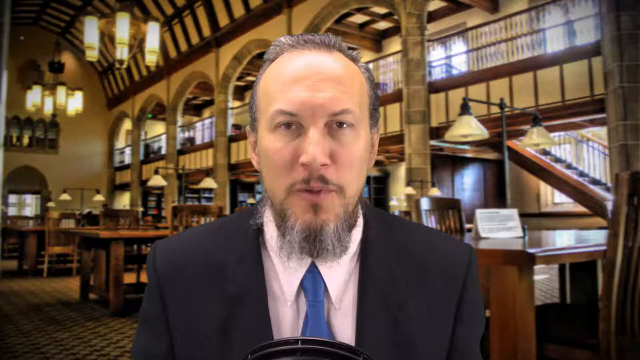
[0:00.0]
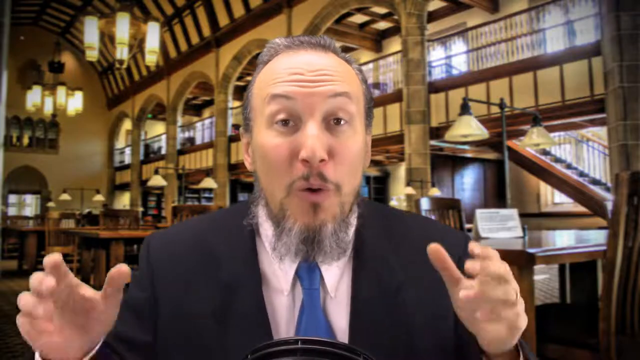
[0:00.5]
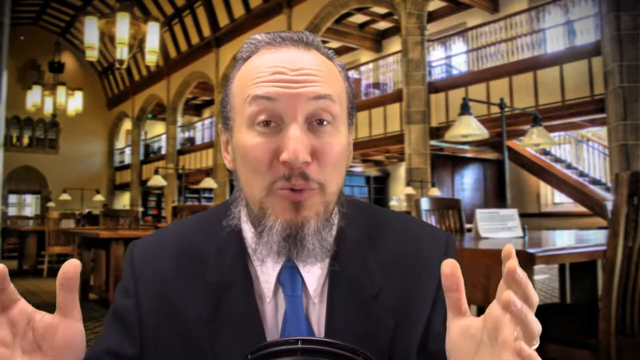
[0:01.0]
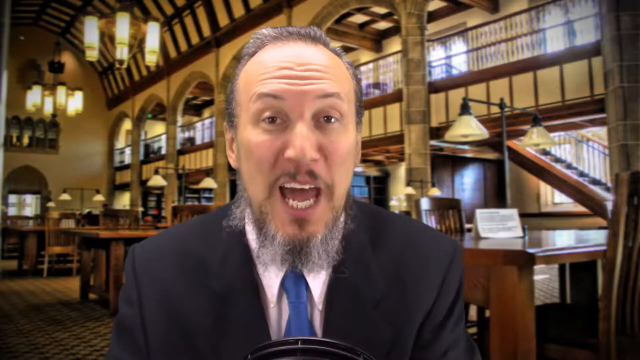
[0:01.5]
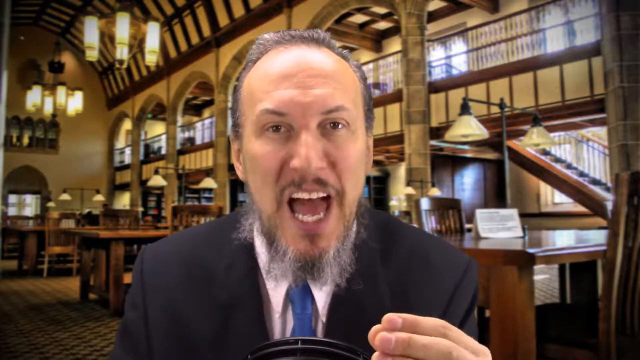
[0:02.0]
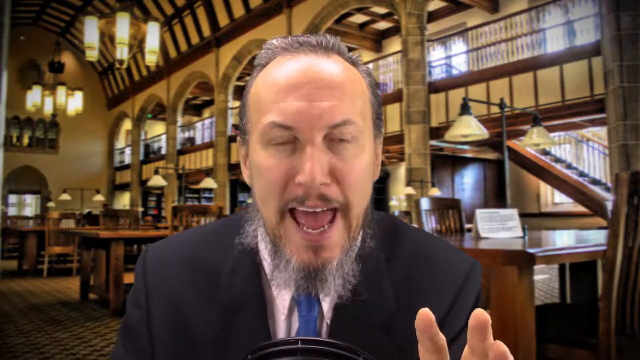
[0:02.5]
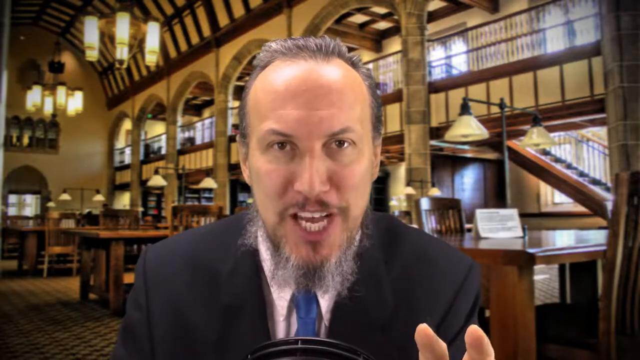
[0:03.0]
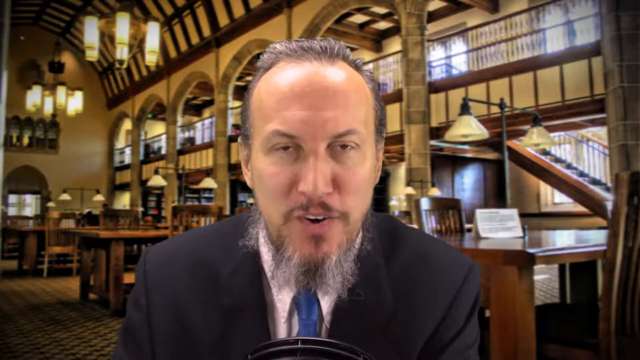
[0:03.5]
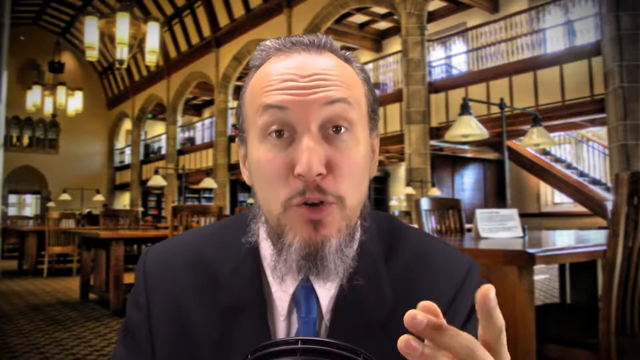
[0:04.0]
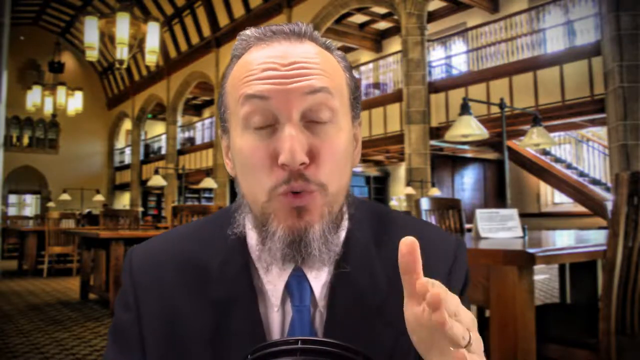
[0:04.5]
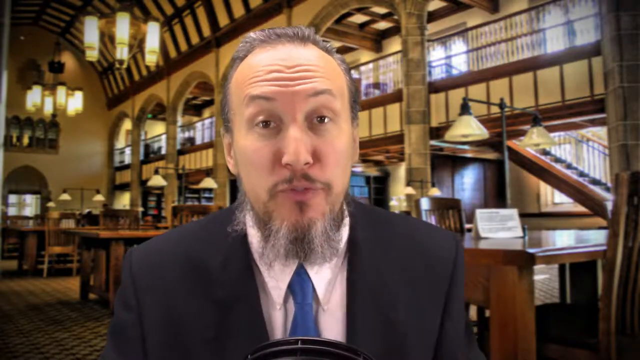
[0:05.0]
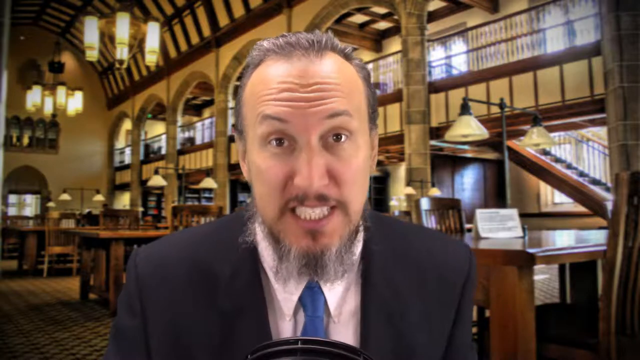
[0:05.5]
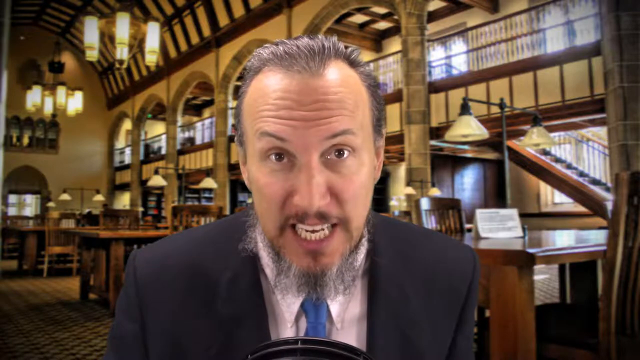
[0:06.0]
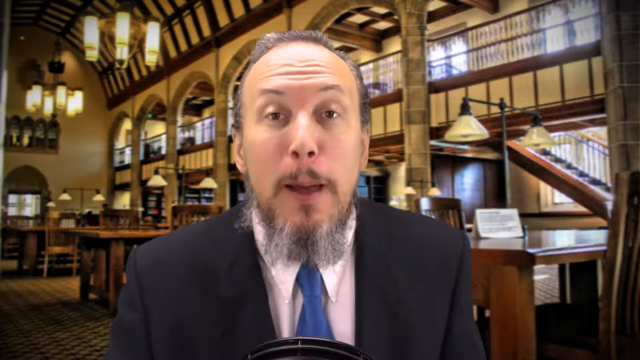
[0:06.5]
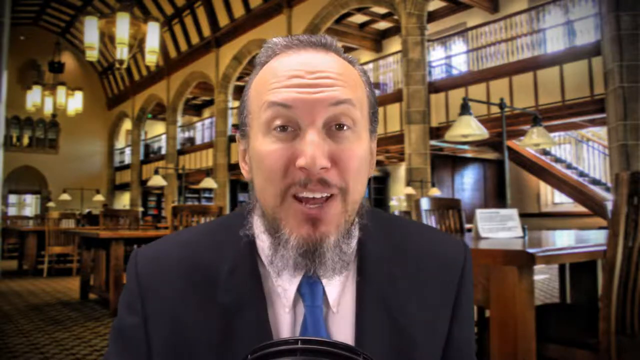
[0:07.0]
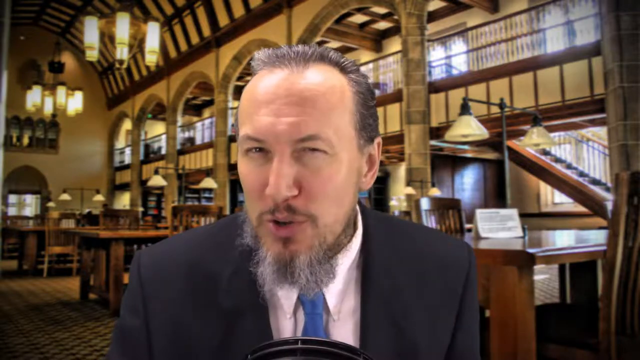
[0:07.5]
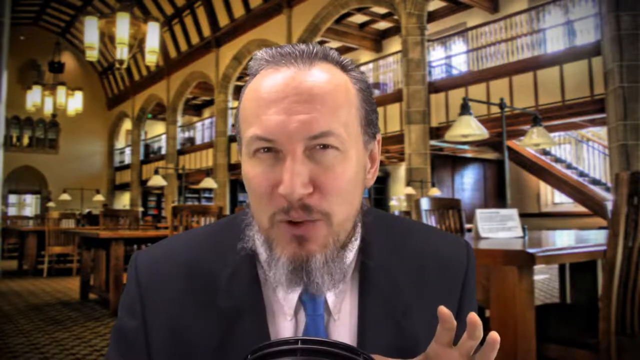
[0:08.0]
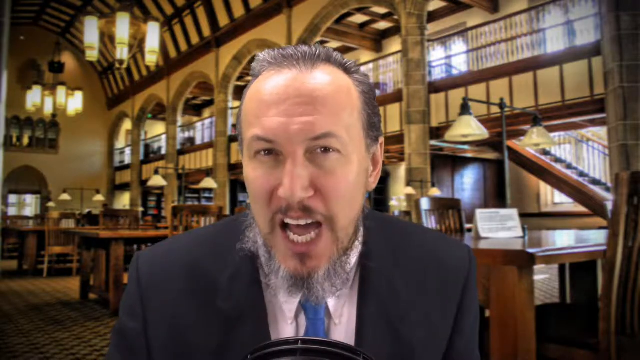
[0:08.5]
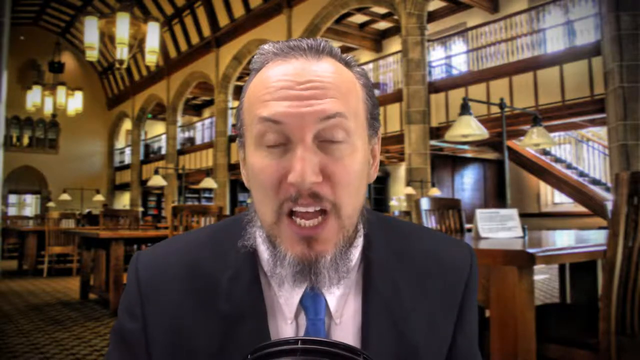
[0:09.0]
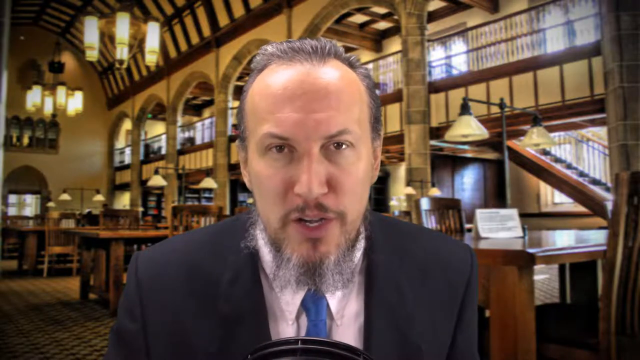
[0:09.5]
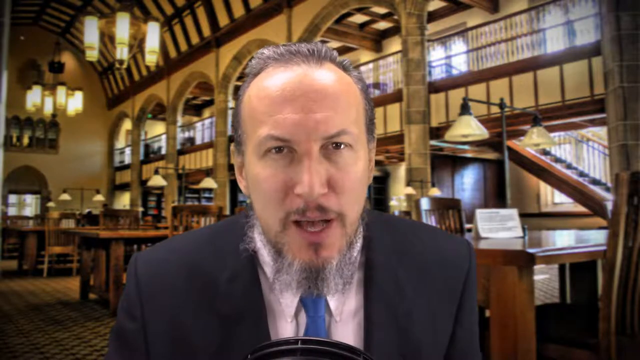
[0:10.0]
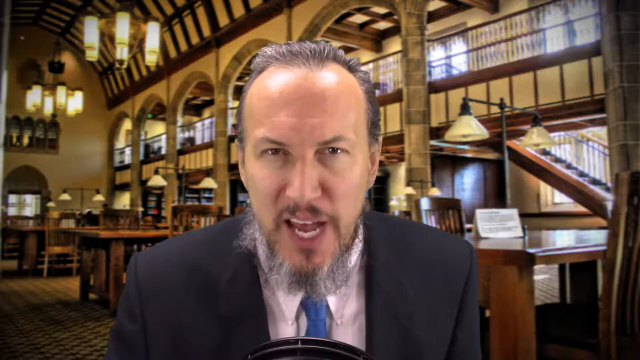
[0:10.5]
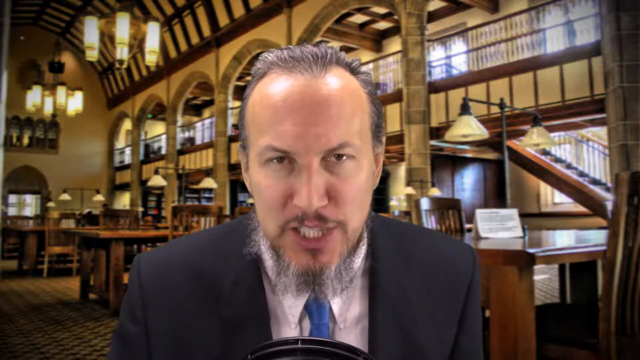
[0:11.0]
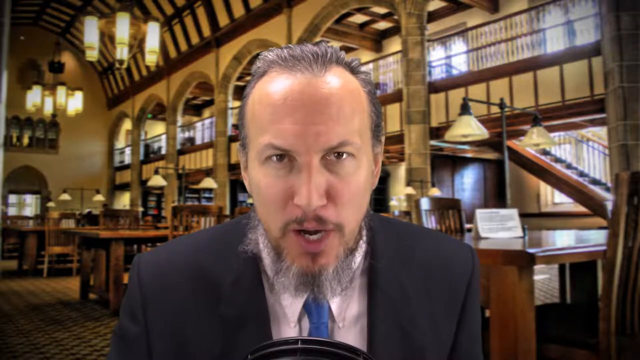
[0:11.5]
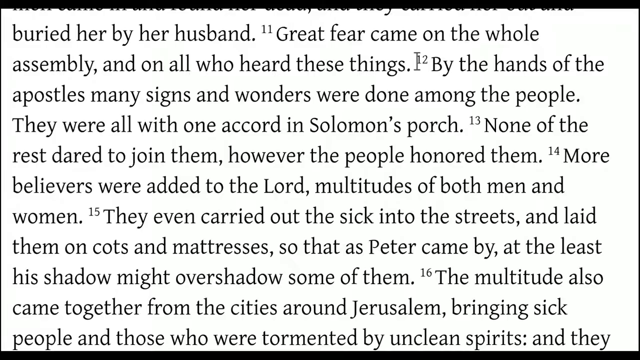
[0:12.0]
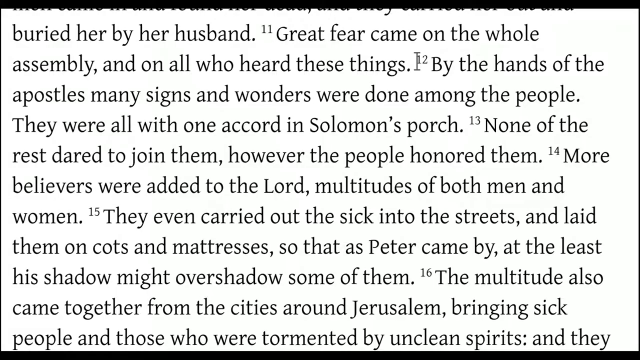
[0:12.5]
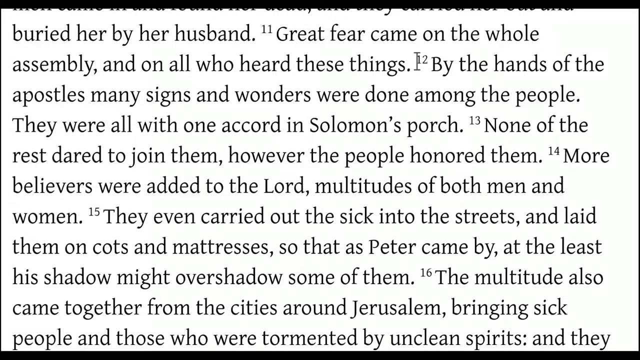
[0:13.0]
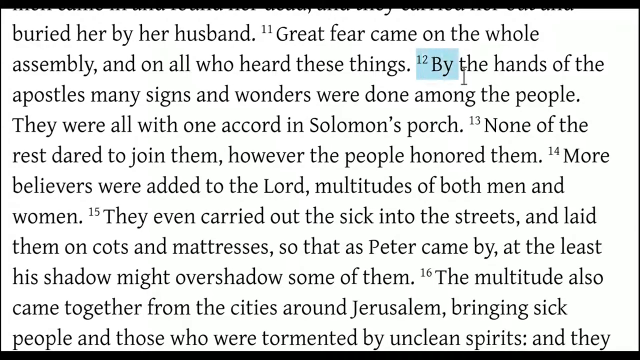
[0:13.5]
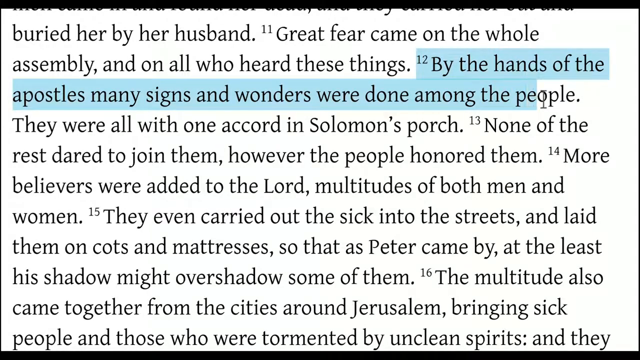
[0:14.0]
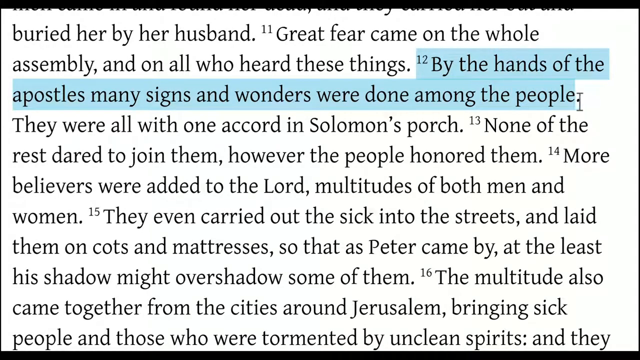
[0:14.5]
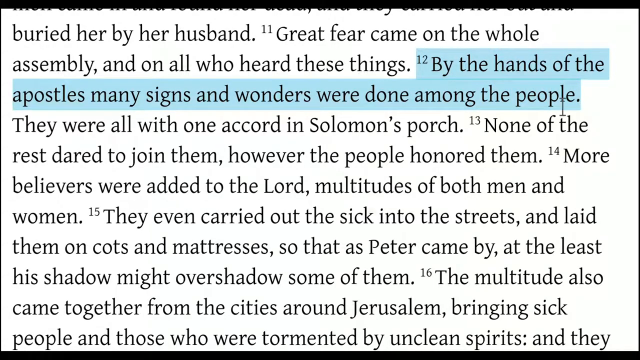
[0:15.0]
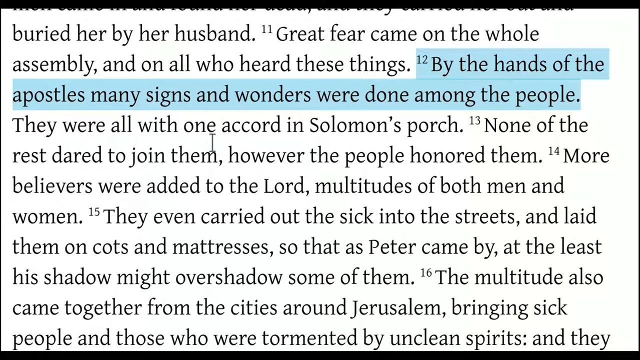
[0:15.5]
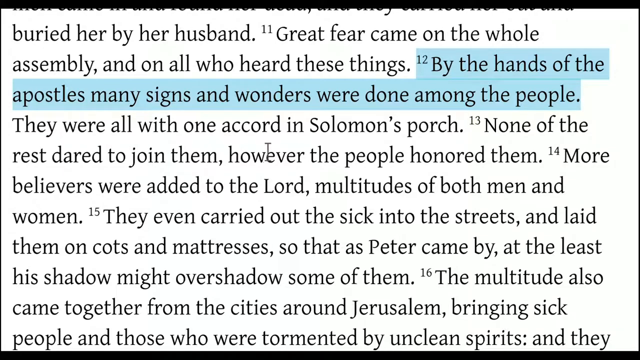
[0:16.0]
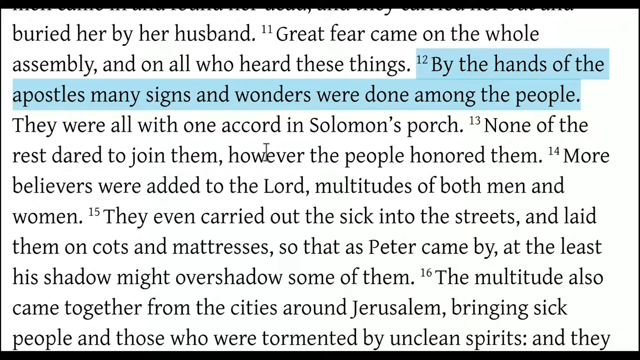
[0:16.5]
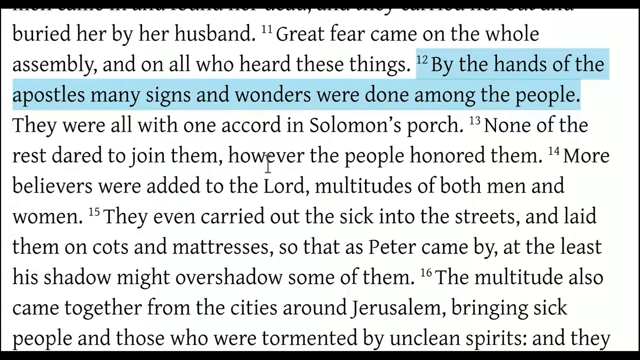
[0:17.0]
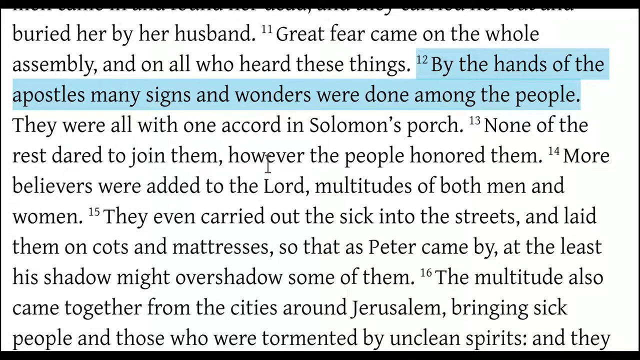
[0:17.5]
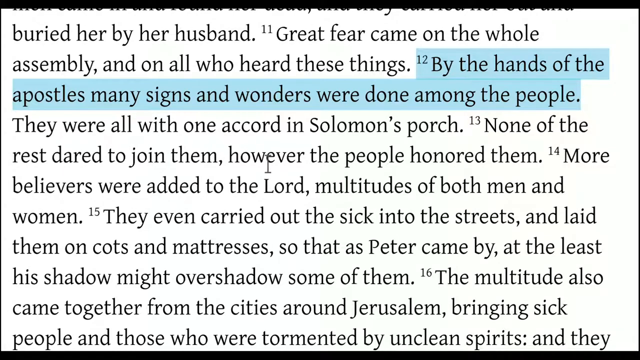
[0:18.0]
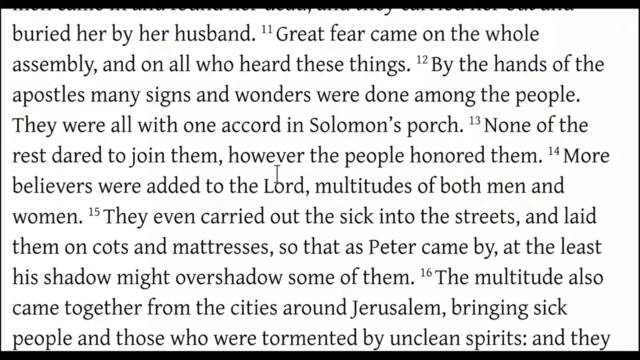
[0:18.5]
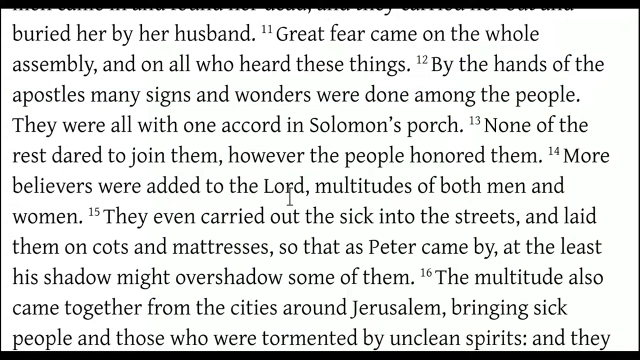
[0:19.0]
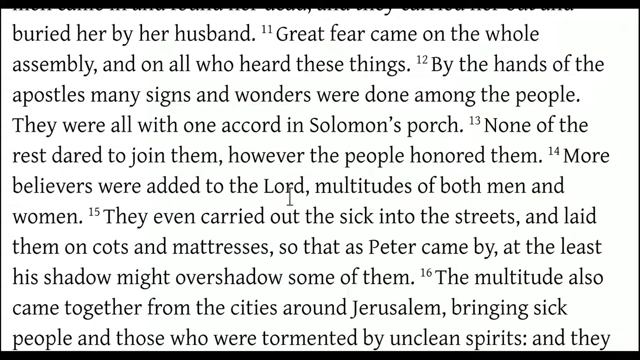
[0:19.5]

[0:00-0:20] Indoors, in what looks like a very impressive library, a man of approximately mid to late 40s is seen from the shoulders up, looking directly into the camera and talking. He has Caucasian-looking skin, dark salt-and-pepper hair slicked back short, and a rather long, scraggly, mixed-colored beard and mustache. He has brown eyes and brown hair and wears a dark blue suit, a white shirt and a blue tie. He talks animatedly with his hands, both hands going up, and then gestures primarily with his left hand as he stresses his words toward the camera. The video then switches to a close-up of black text on a white background, apparently from a book: "Buried by her husband, great fear came on the whole assembly and on all who heard these things." The word "by", with a footnote of 12 on the upper left, is highlighted in blue. The text reads, "by the hands of the apostles, many signs and wonders were done among the people. They were all with one accord in Solomon's porch."